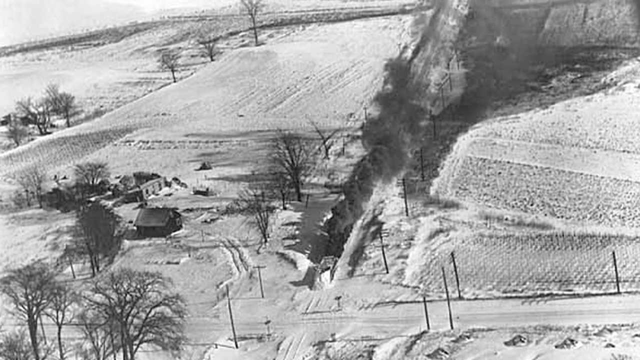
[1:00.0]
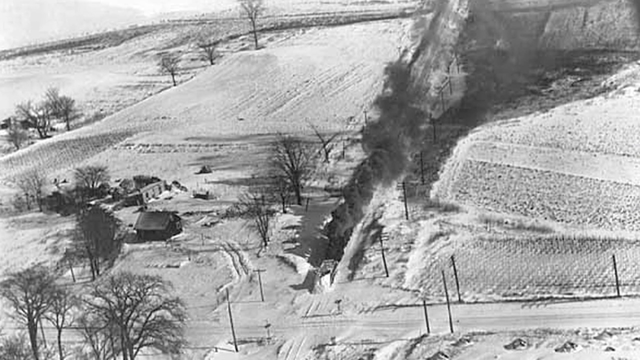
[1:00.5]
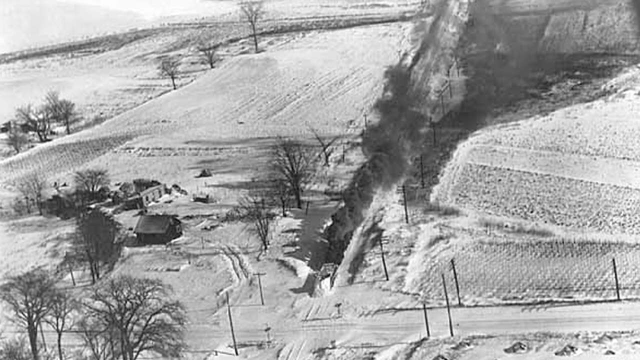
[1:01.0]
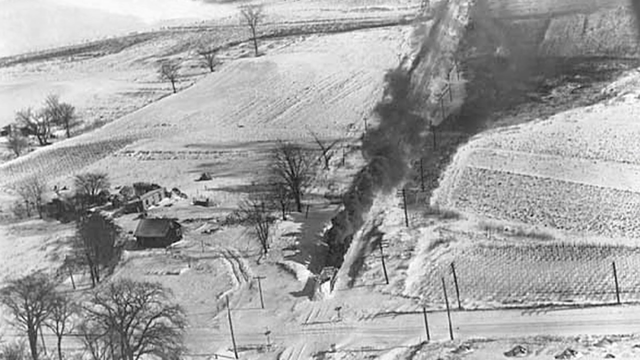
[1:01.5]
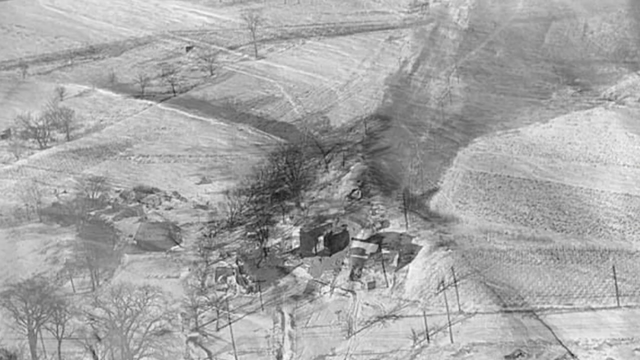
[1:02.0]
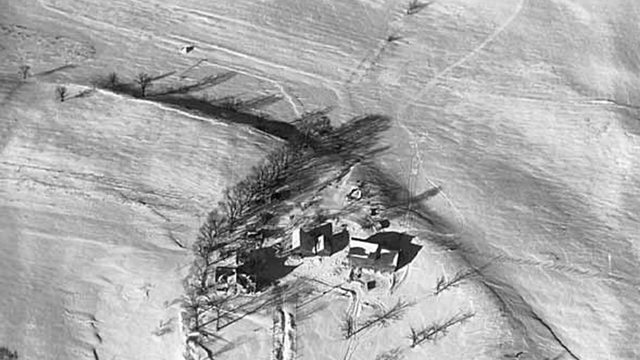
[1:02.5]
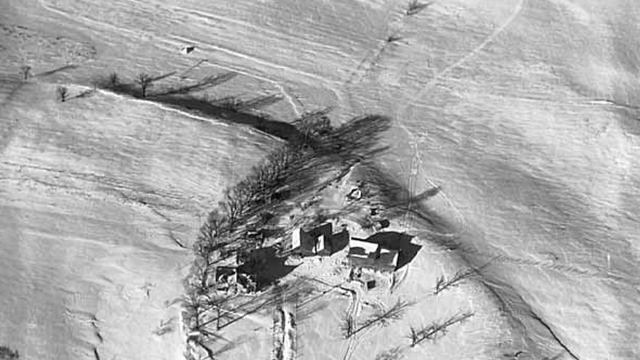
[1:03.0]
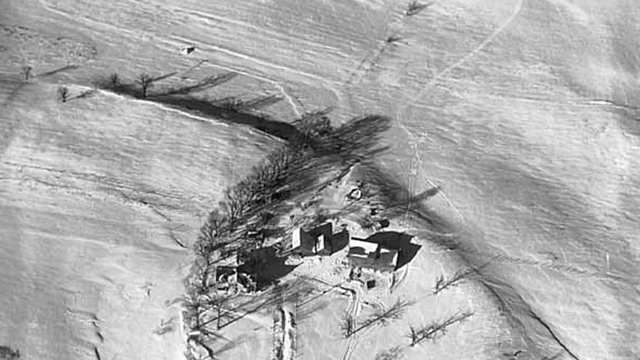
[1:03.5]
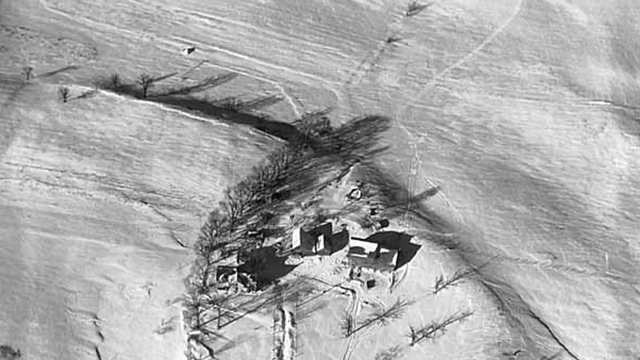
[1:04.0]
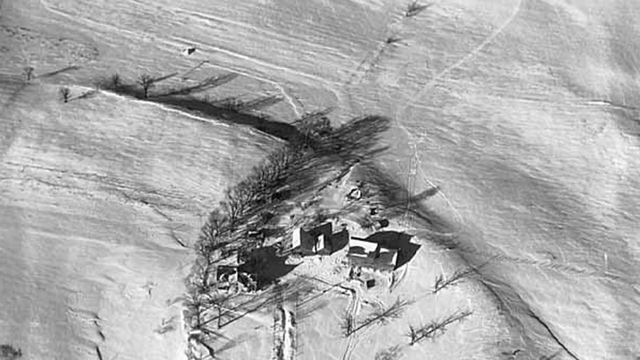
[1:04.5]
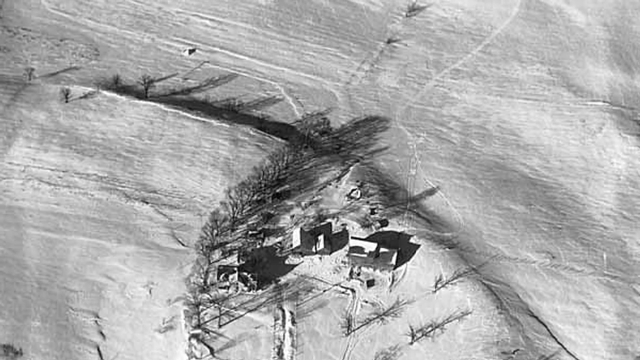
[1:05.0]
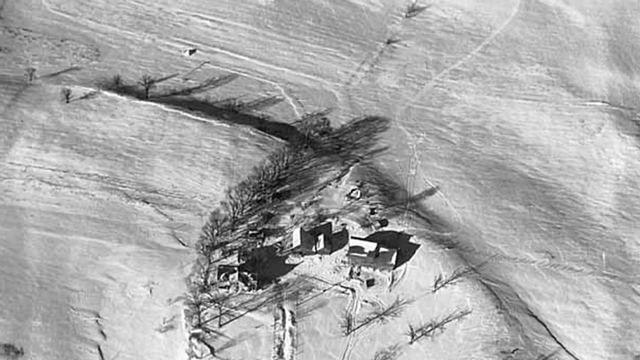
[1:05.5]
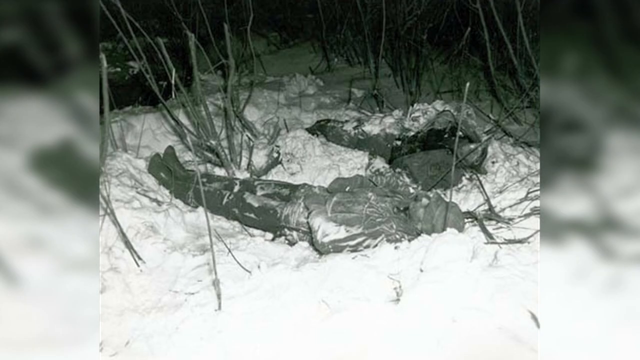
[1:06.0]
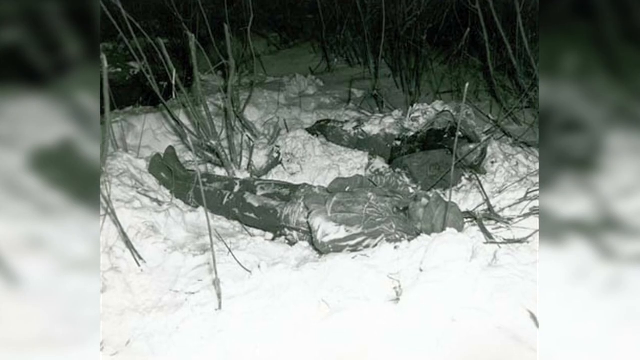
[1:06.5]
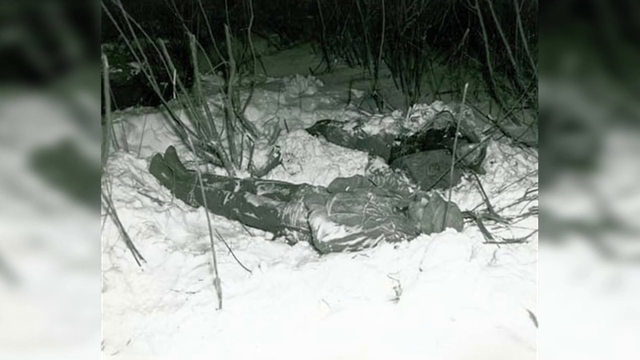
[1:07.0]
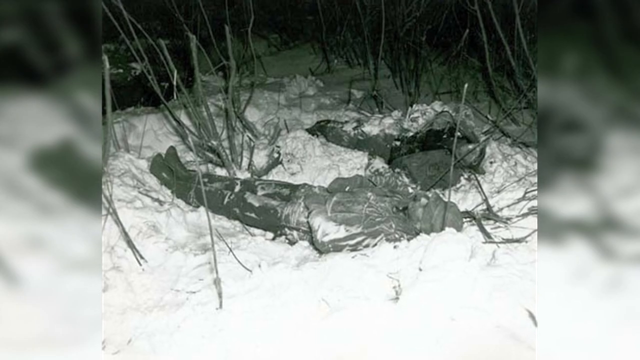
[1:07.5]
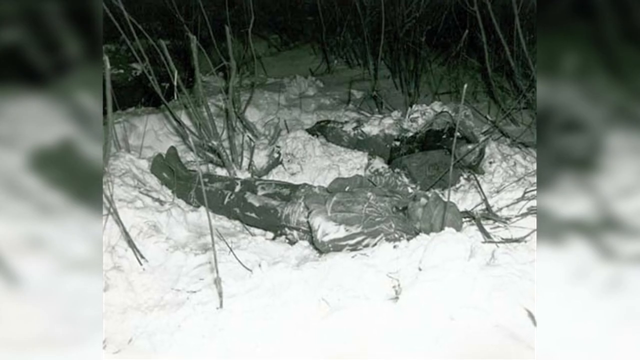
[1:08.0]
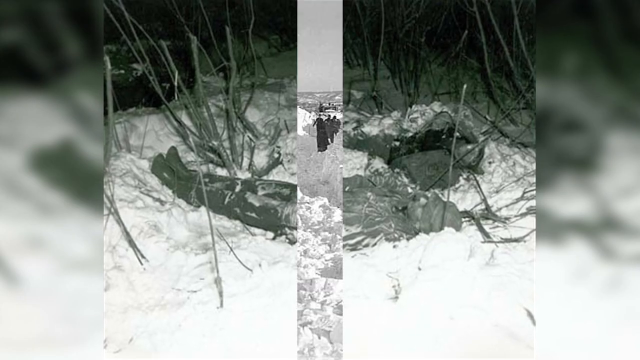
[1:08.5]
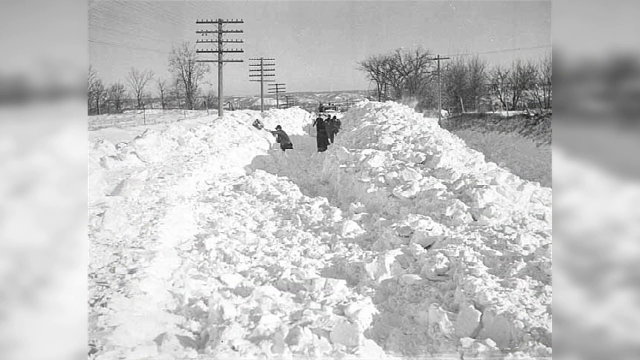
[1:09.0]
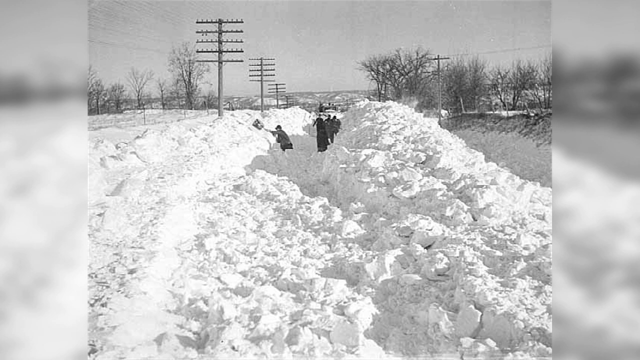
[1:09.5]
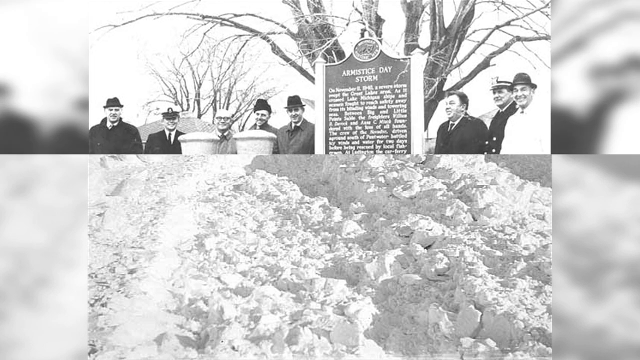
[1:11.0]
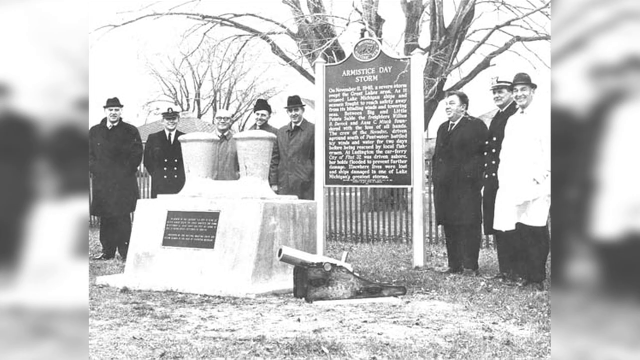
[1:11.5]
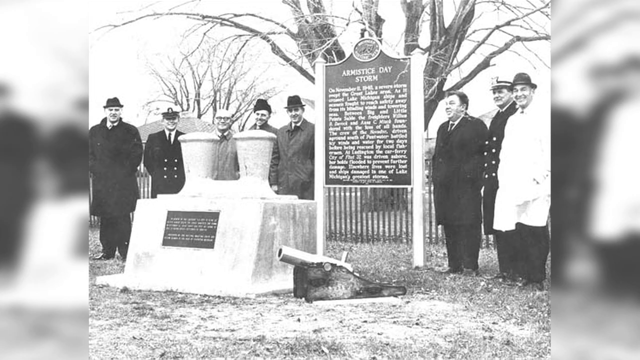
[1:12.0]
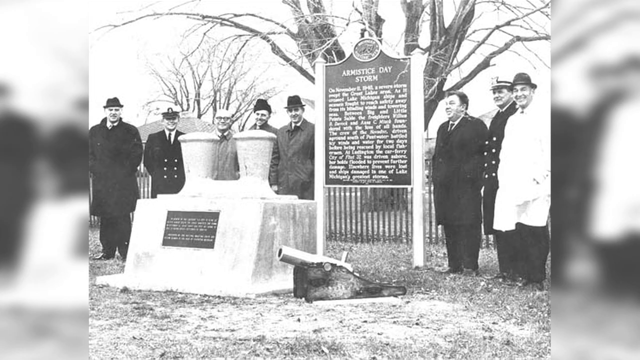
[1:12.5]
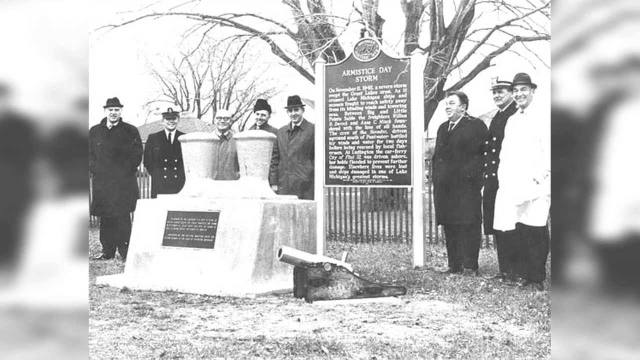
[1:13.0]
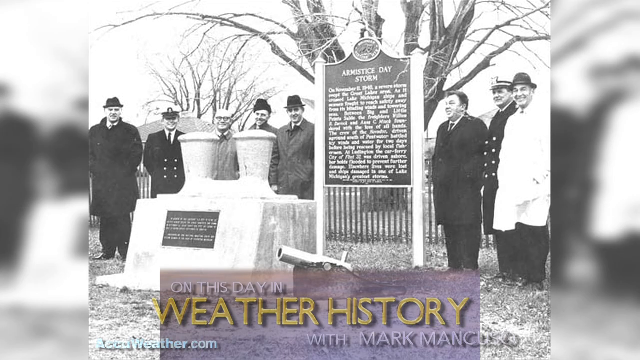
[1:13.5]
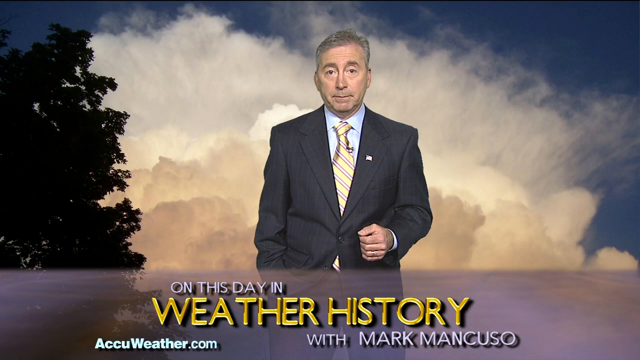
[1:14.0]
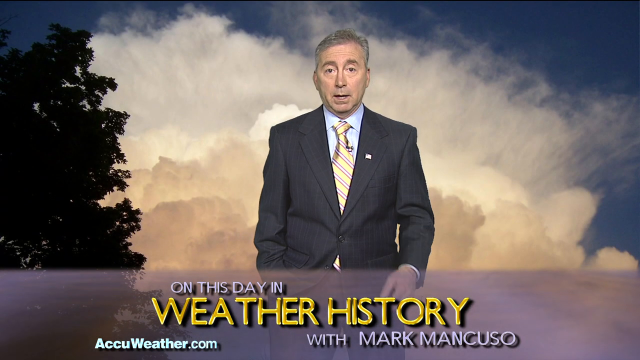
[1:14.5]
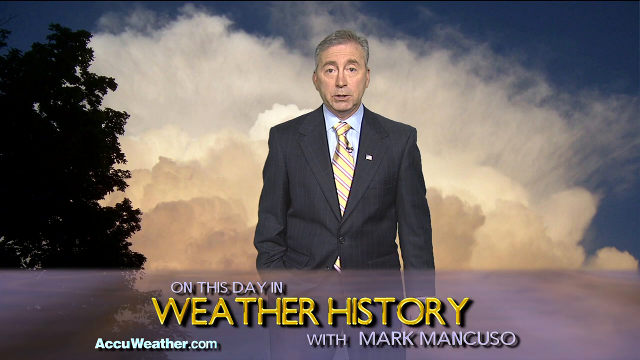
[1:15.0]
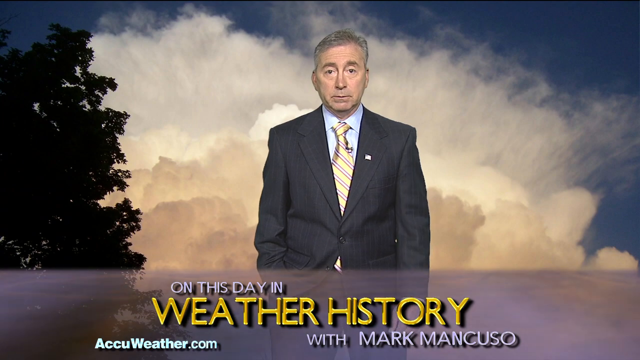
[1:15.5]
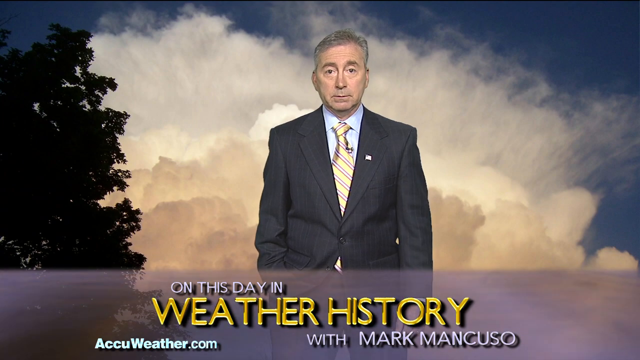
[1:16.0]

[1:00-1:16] A black and white aerial image shows what appears to be a train, with a plume of smoke rising above it toward the sky as it travels along its tracks. The train appears to be going through farmland, with rows of wheat fields and a single cottage or barn on the side. The image transitions to an overhead view of what appears to be another farm, this time with the ground completely covered in snow so that no details can be made out. The video cuts to a person lying in the snow, apparently wearing heavy winter gear, with their hands in front of them almost in a funeral pose; it is not clear from the image whether they are alive or dead. Next, people shovel snow out of what was presumably once a road; they have dug so much snow that they almost appear to be in a trench, with the snow walls on either side of the dug-out path extending higher than any of the people. Then people surround what appears to be a sort of monument or plaque next to a statue, which reads "Armistice Day Storm" and has details about the event; the people are standing, posed and smiling next to it, ready for a picture. The video then cuts back to the host of On This Day in Weather History as it ends.